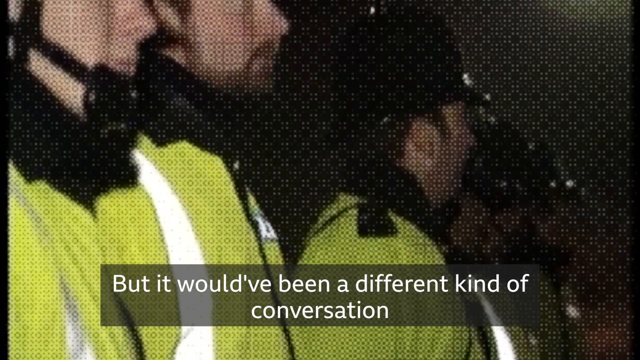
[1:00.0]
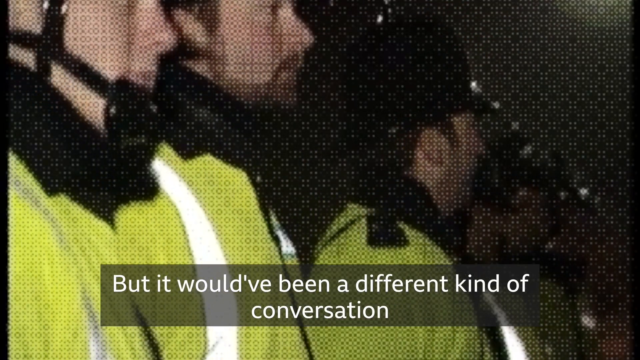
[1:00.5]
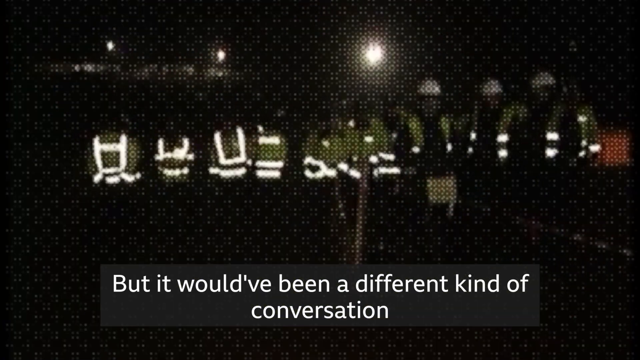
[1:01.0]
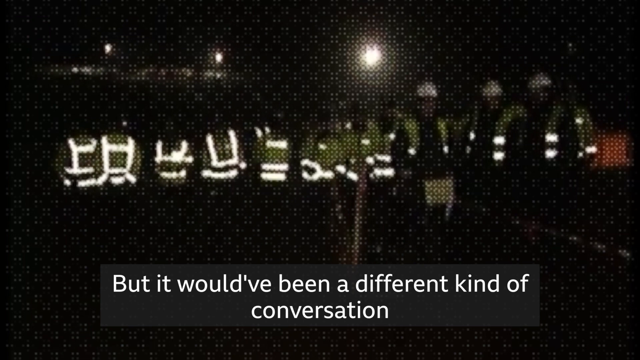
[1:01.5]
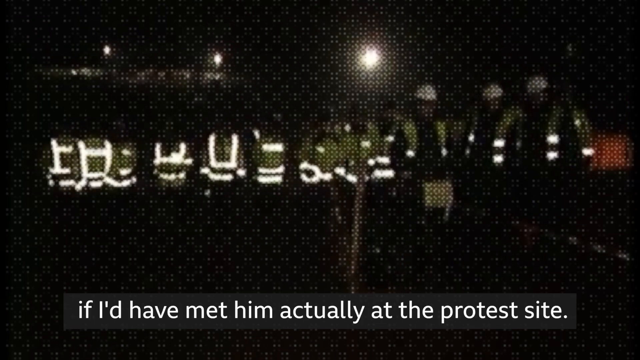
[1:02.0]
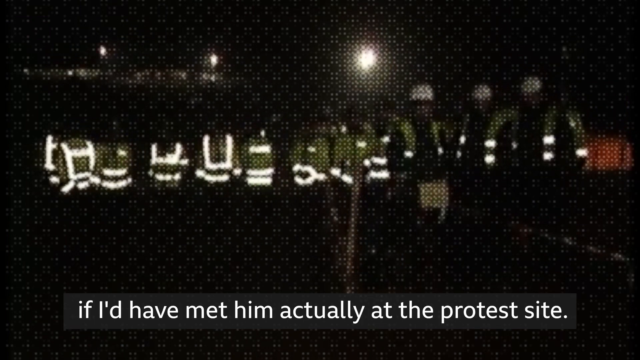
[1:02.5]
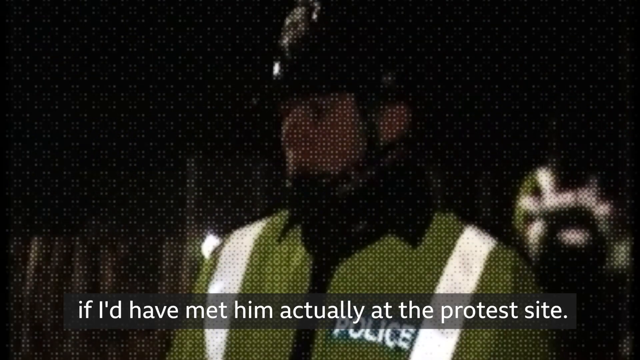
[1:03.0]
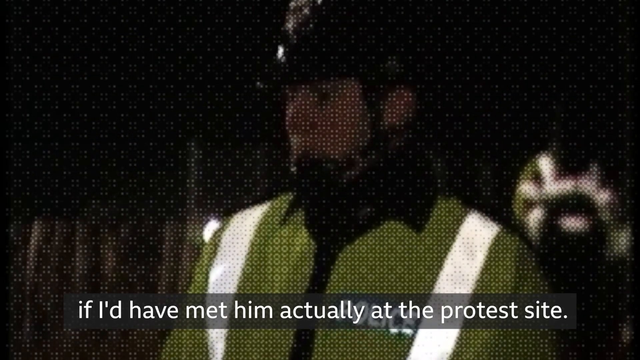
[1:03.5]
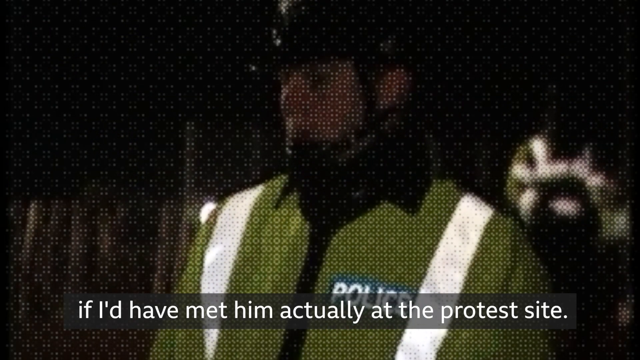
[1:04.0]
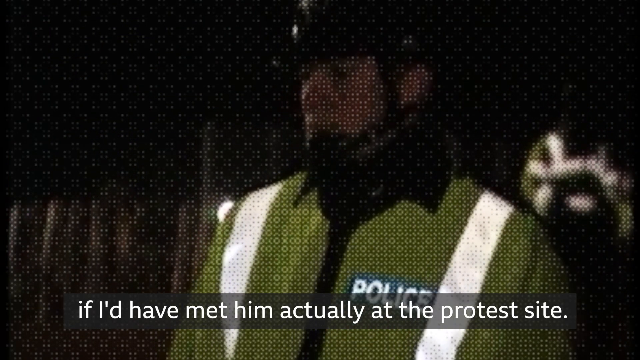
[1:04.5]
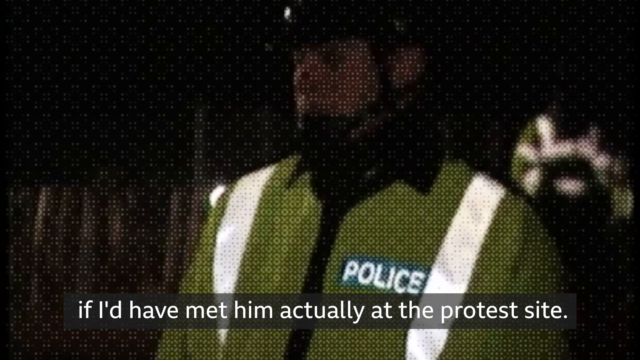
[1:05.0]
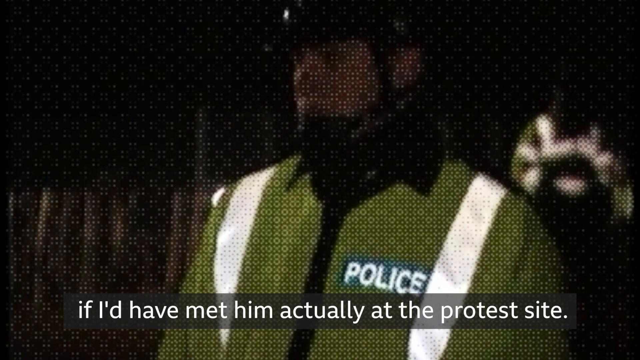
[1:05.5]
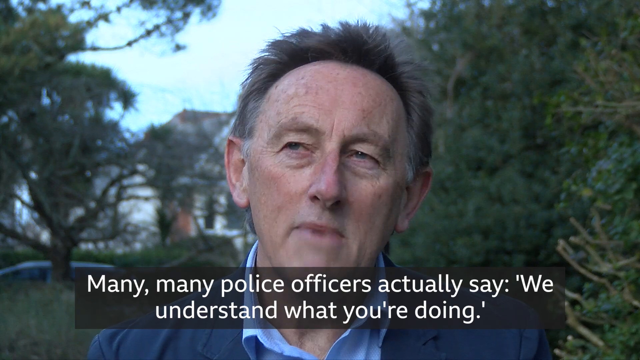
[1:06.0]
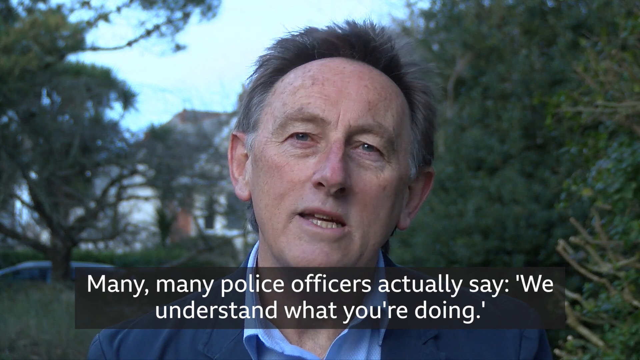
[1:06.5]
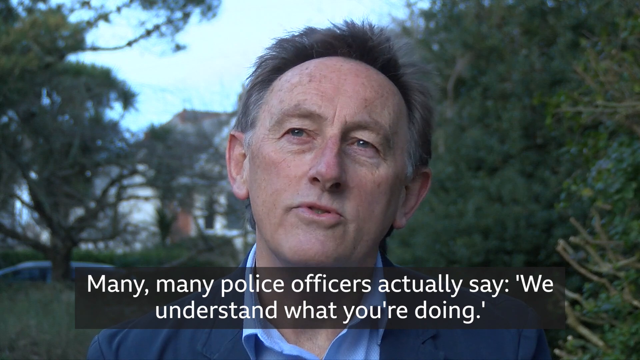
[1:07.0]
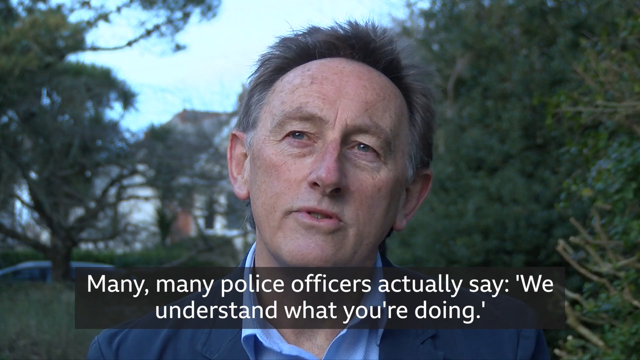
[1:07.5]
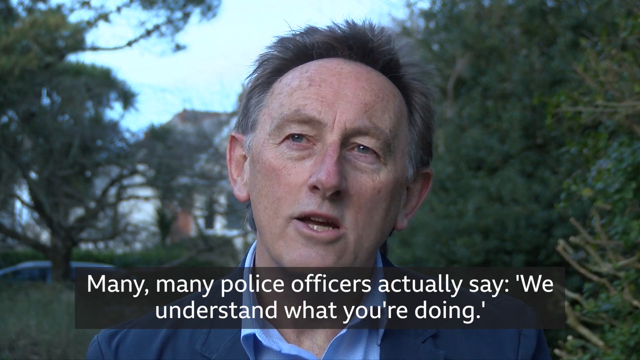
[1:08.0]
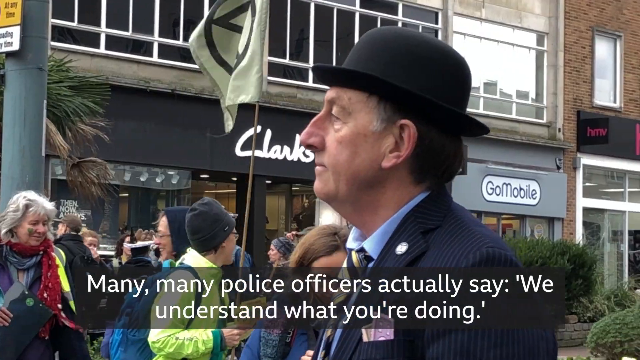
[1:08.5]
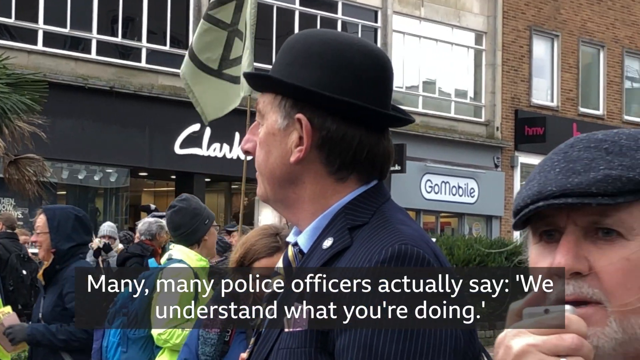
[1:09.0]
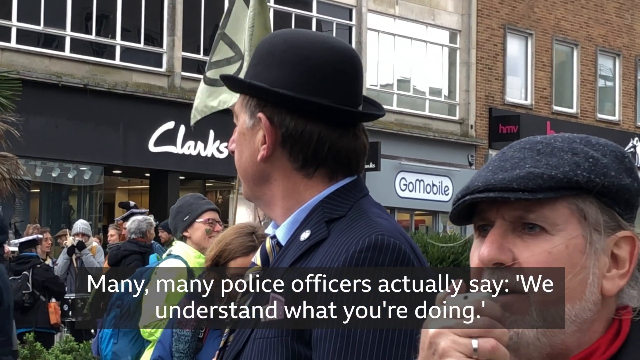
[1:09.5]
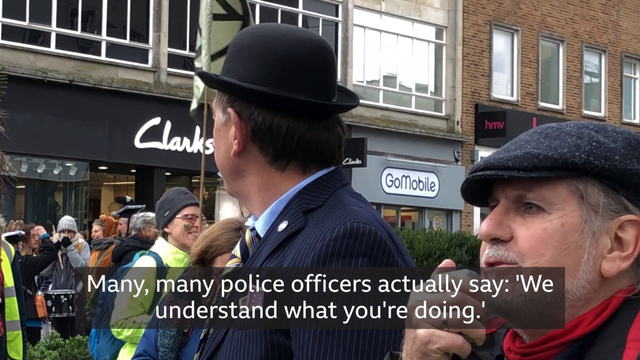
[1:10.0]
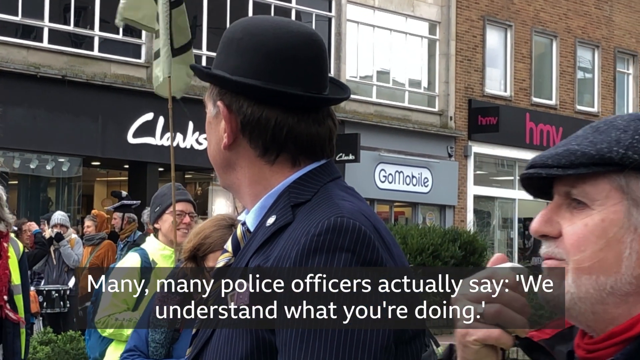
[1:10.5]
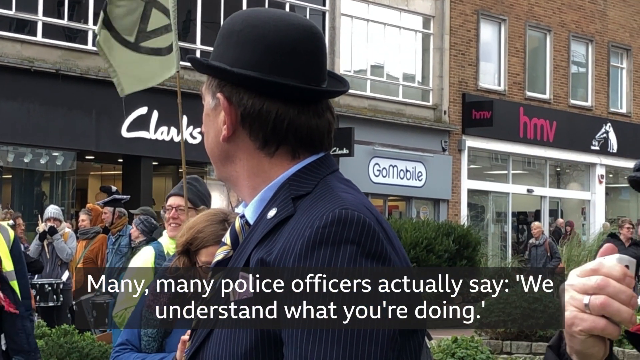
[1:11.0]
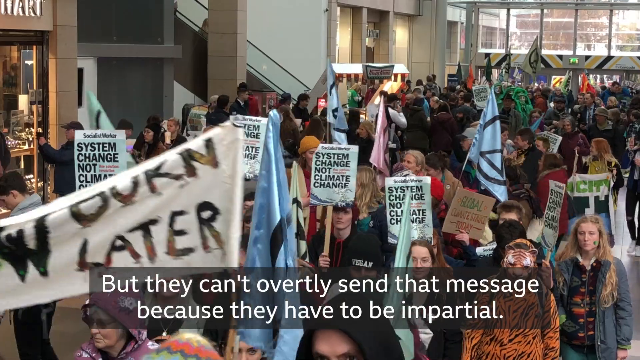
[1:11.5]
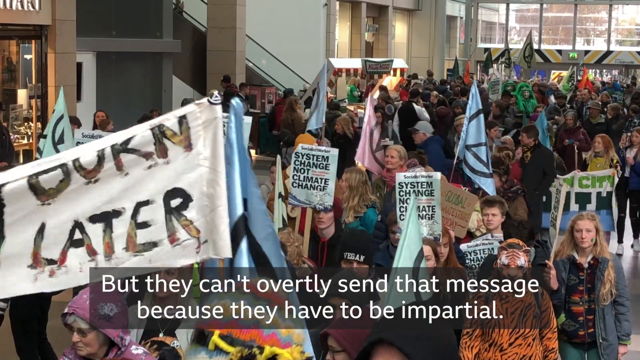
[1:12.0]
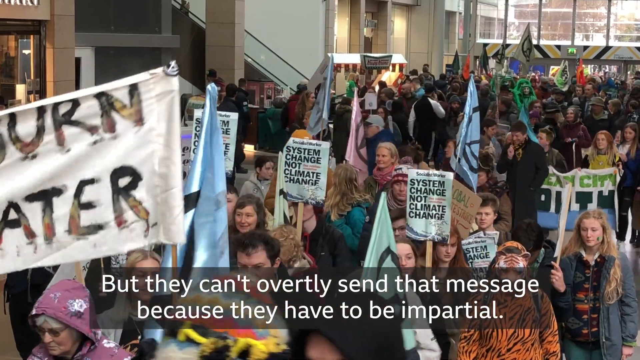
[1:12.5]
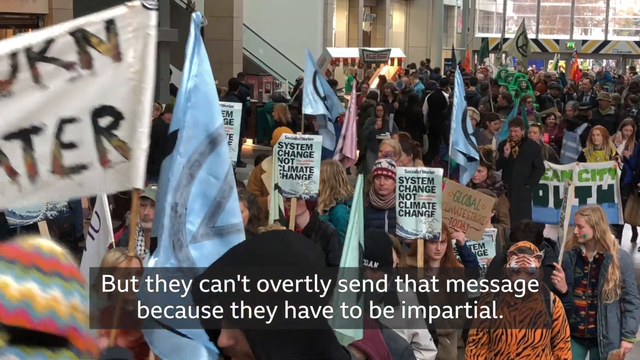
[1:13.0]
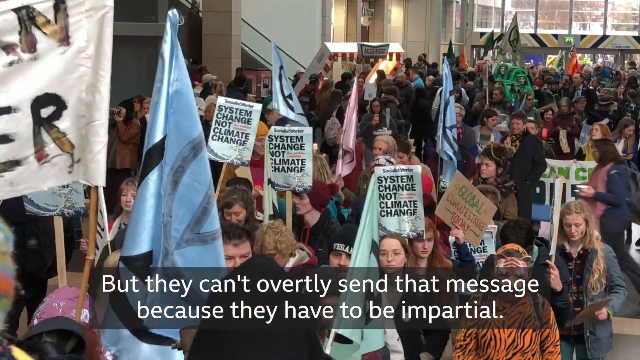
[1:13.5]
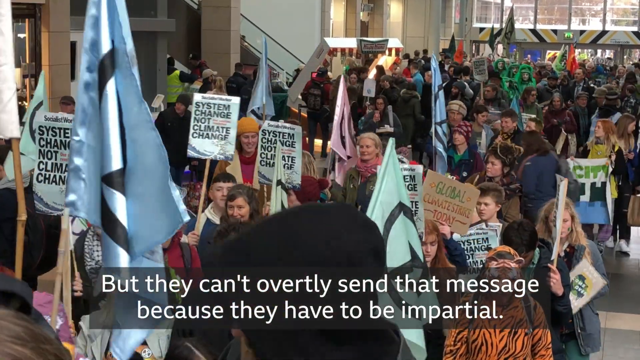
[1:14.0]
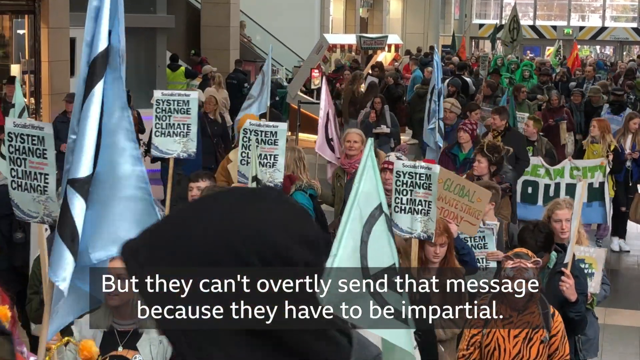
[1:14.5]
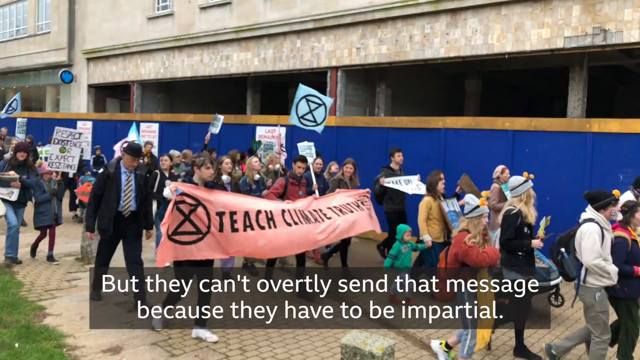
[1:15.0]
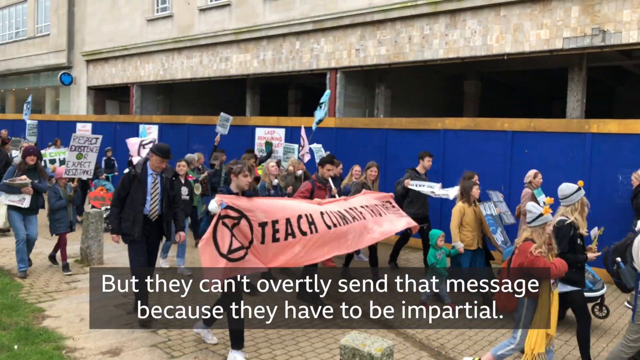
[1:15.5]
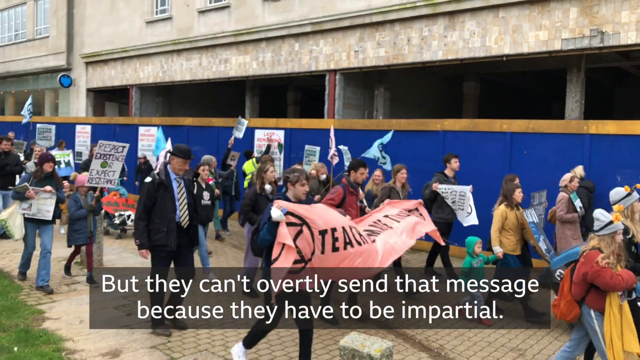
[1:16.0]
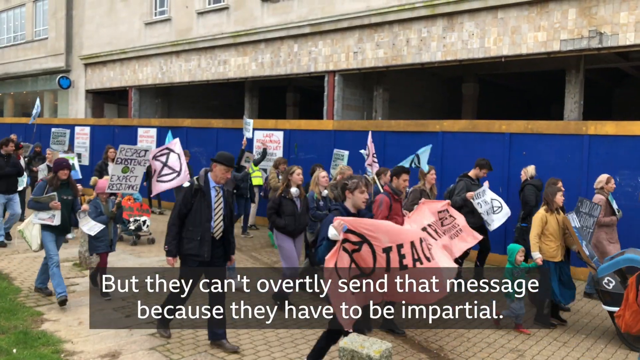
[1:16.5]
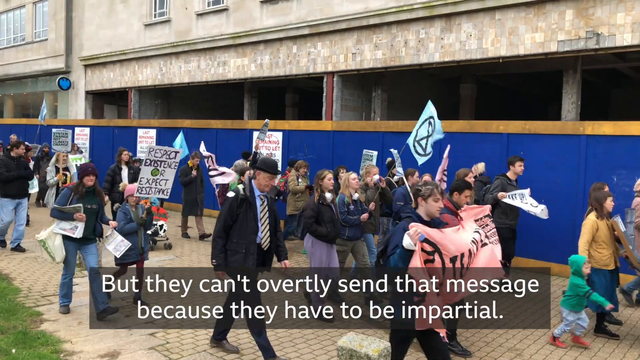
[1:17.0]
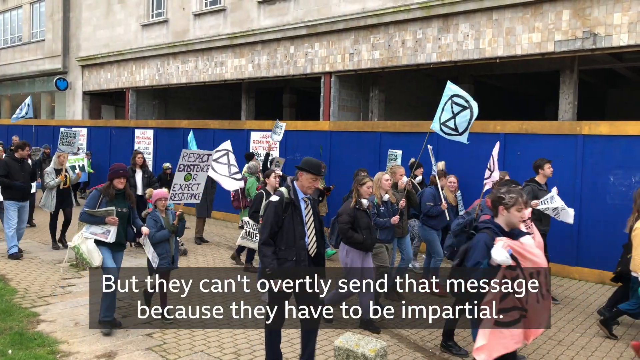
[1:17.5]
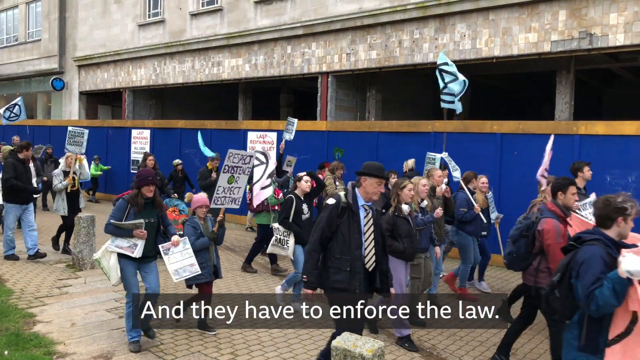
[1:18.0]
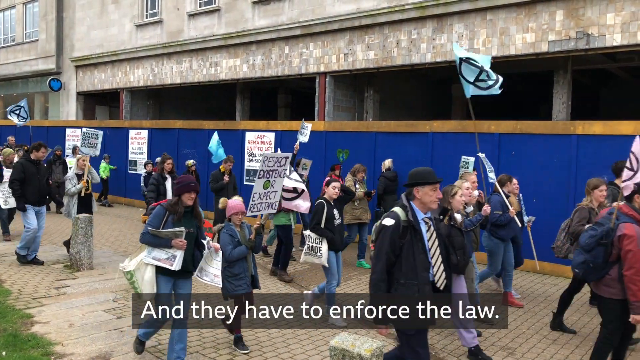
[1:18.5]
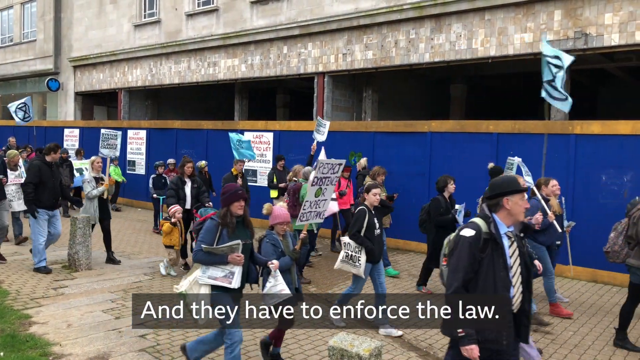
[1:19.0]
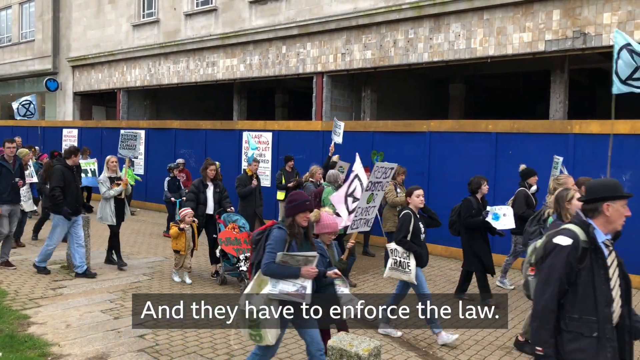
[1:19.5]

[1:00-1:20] Grainy footage shows police officers at night, all wearing yellow safety vests. At first three officers face the camera, and then they are seen sideways. Next, more police officers appear, about 18 of them in the background at night, with their helmets on and their yellow safety vests. Then a man is interviewed in the daytime in a different location. He has brown hair that has been cut and looks slightly spiky while still being thick. Trees and a blue sky are in the background. Then a peaceful protest takes place, with lots of people standing around, holding up banners made of fabric and marching along. The banners are in different colors such as white, blue and pink. There is even a dog with a yellow safety vest on it.